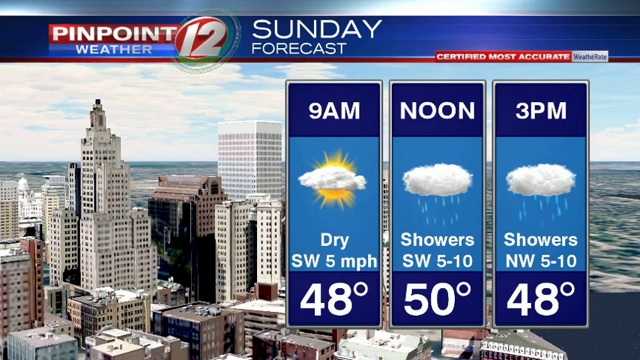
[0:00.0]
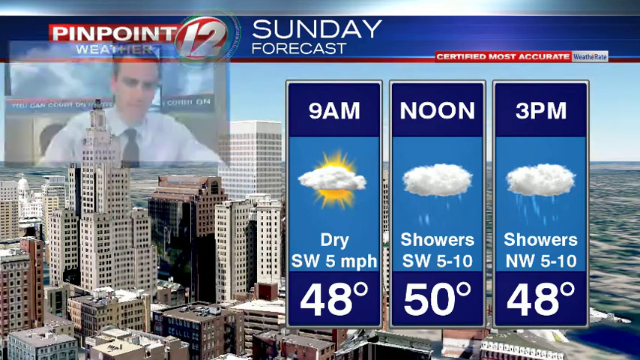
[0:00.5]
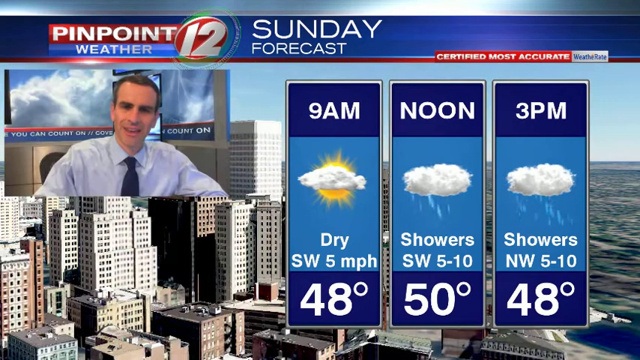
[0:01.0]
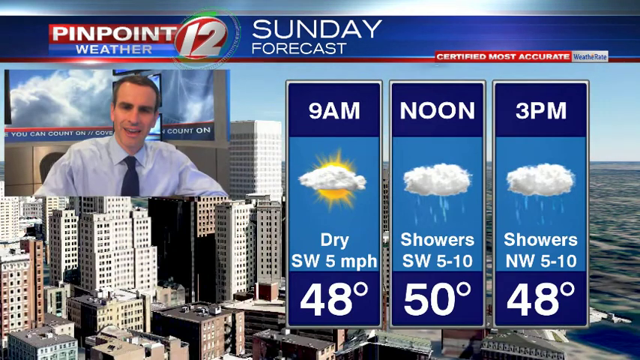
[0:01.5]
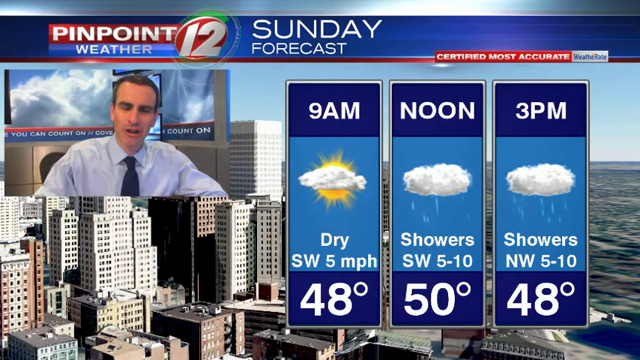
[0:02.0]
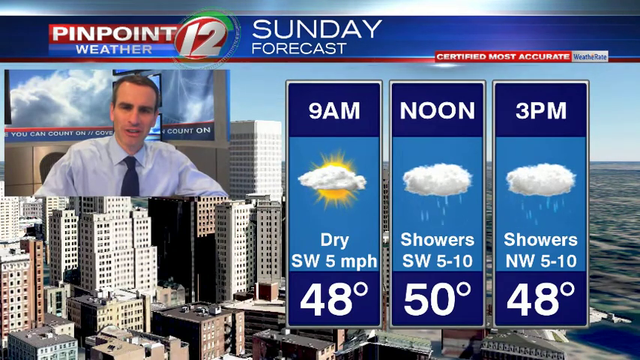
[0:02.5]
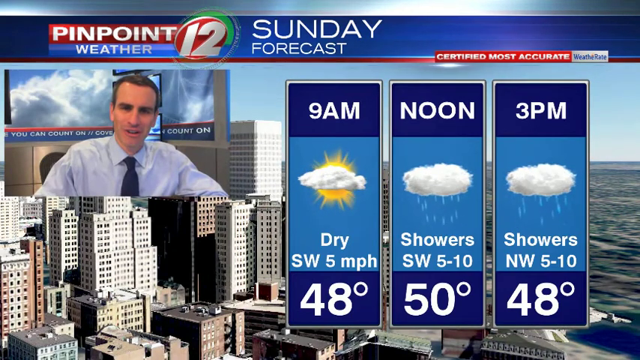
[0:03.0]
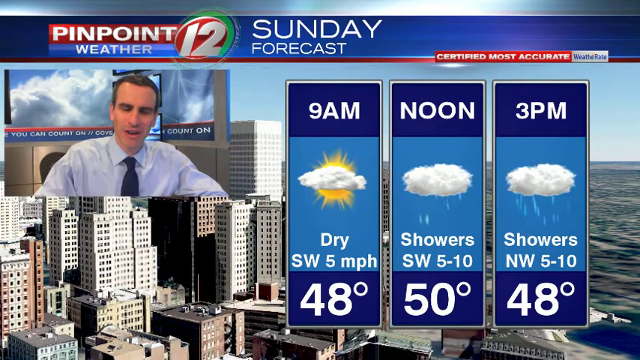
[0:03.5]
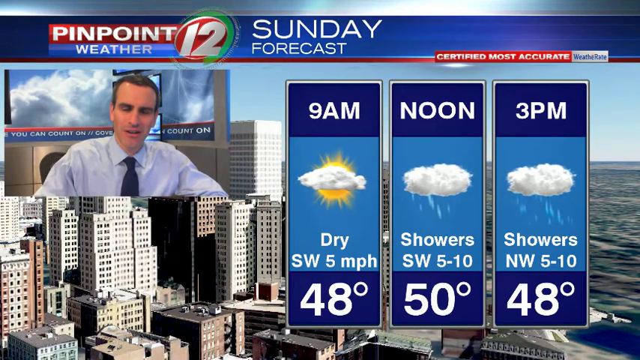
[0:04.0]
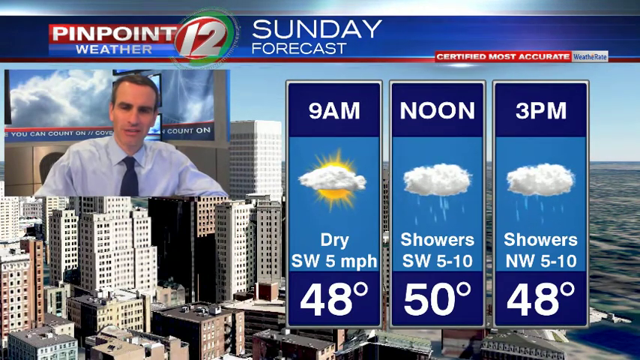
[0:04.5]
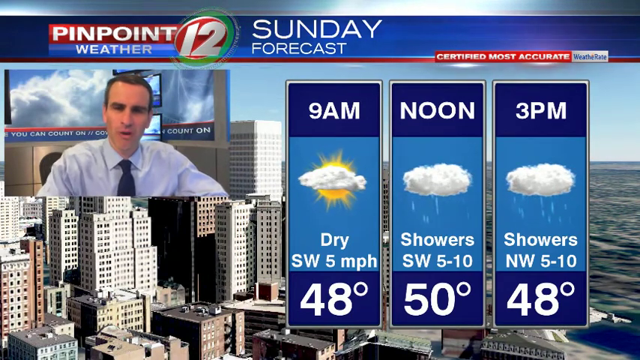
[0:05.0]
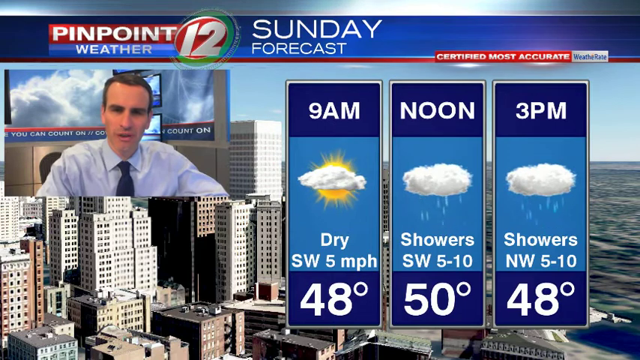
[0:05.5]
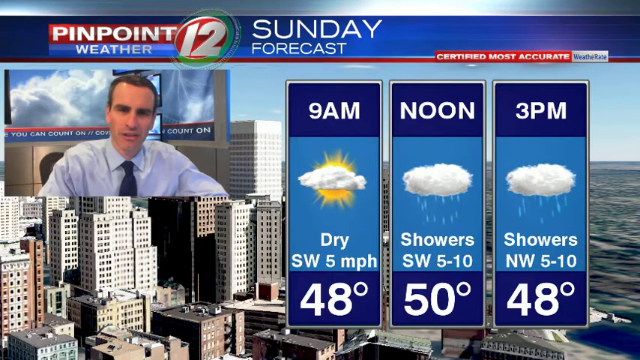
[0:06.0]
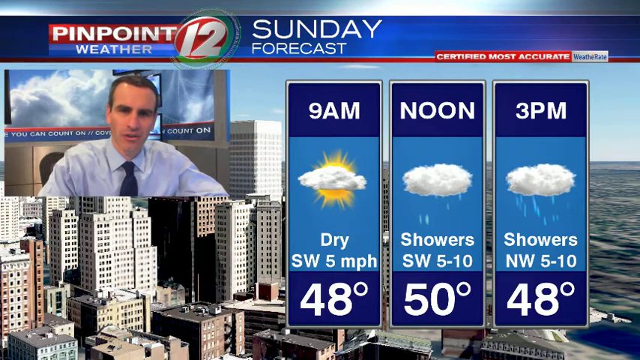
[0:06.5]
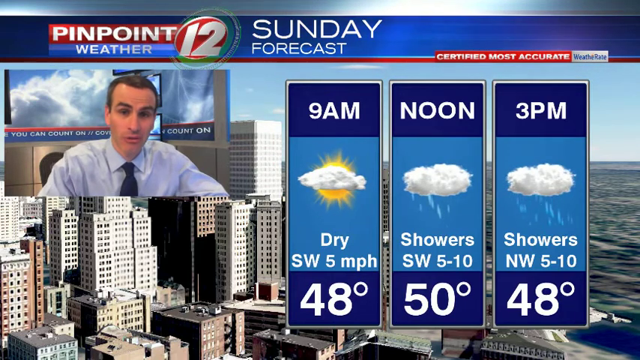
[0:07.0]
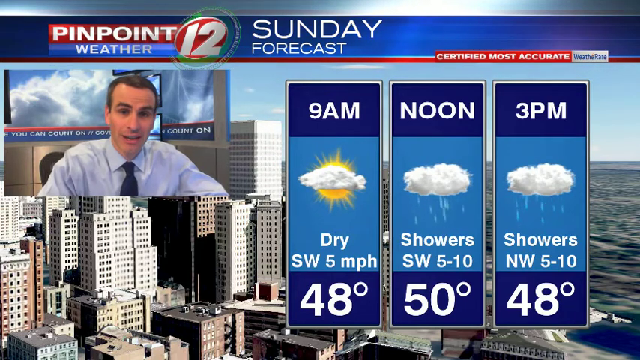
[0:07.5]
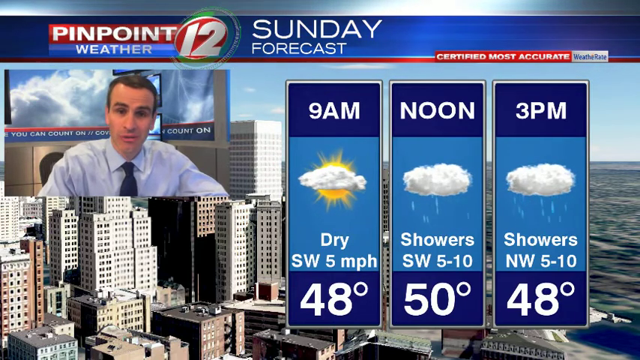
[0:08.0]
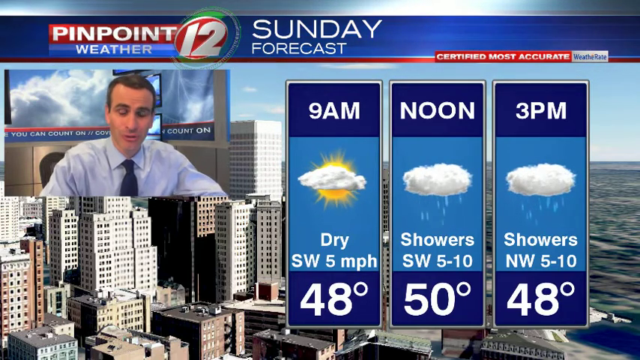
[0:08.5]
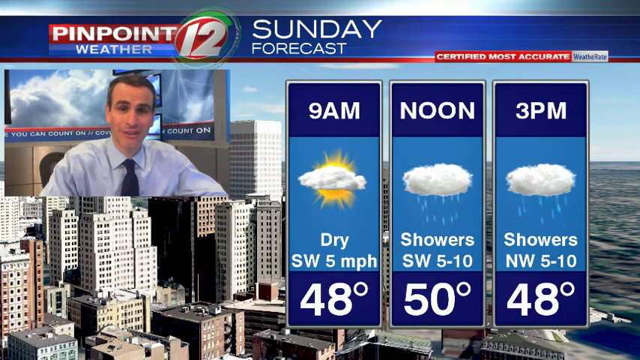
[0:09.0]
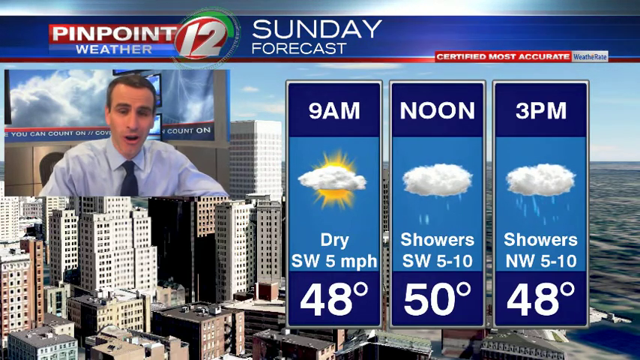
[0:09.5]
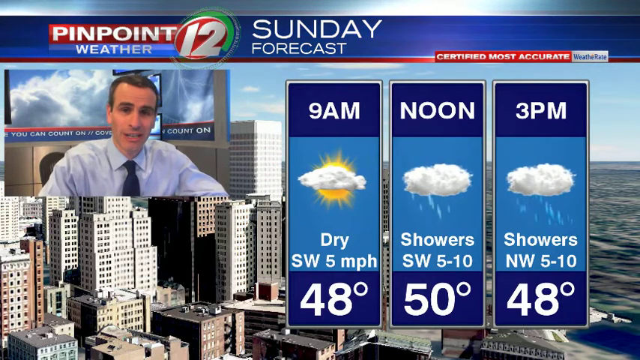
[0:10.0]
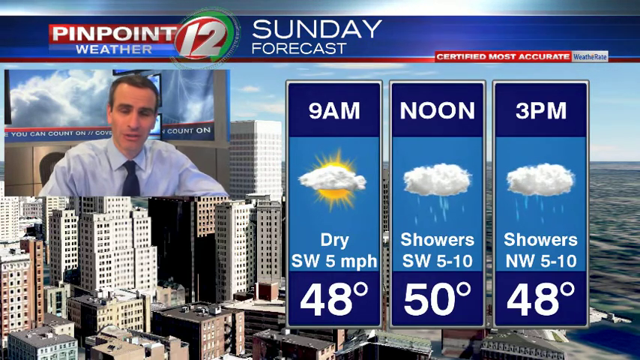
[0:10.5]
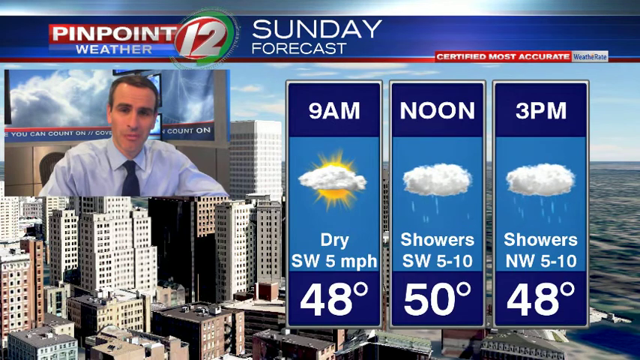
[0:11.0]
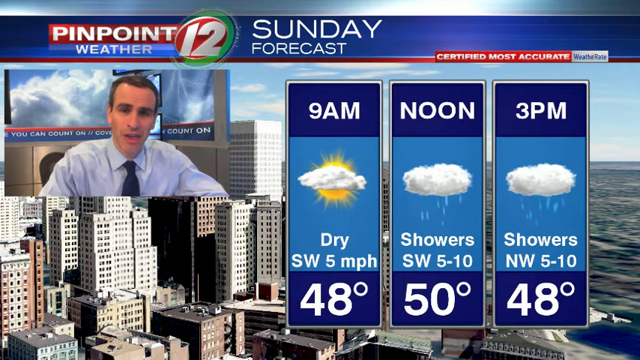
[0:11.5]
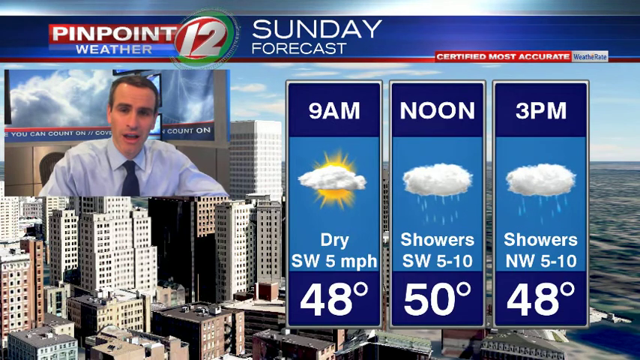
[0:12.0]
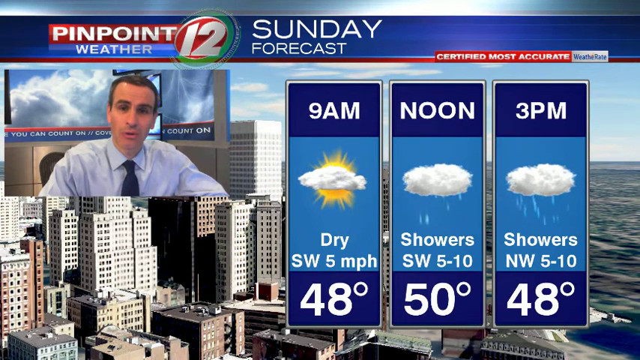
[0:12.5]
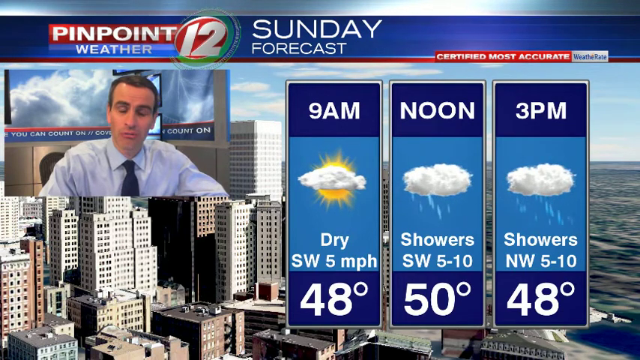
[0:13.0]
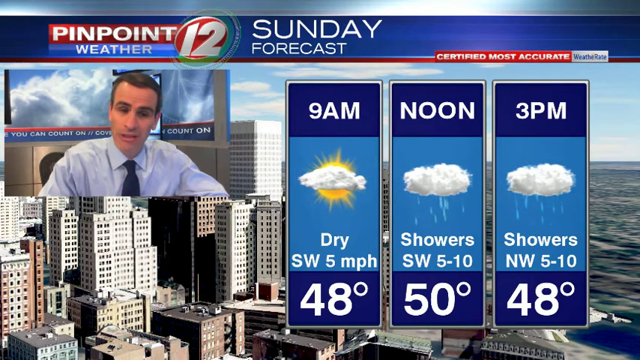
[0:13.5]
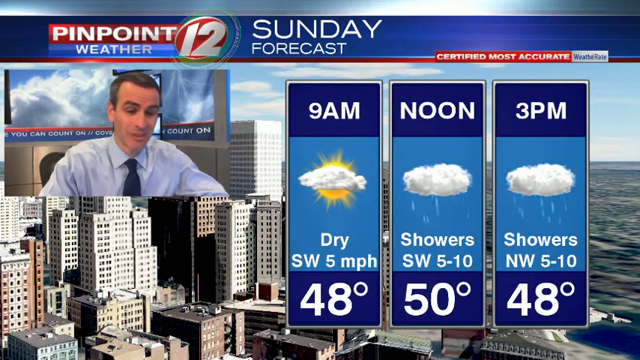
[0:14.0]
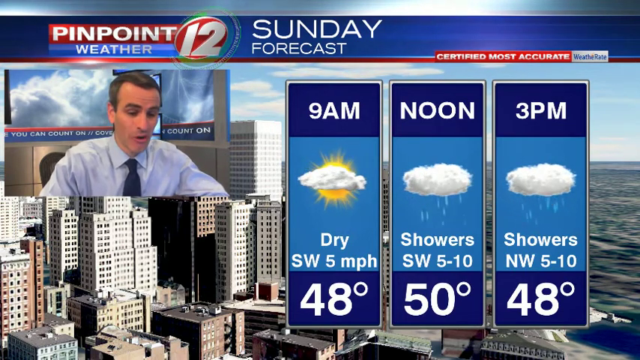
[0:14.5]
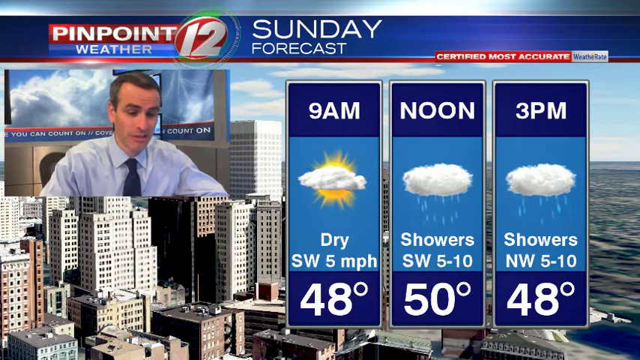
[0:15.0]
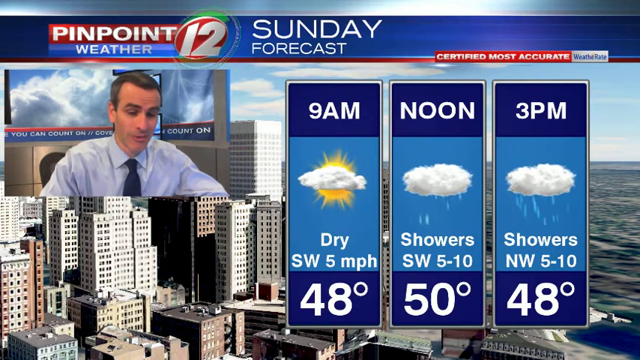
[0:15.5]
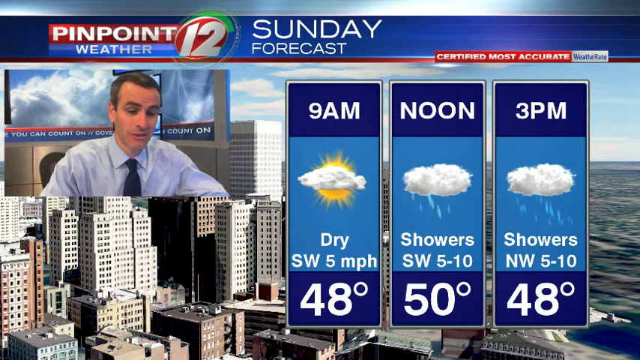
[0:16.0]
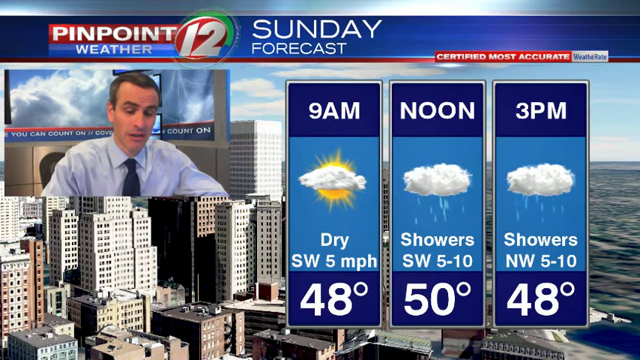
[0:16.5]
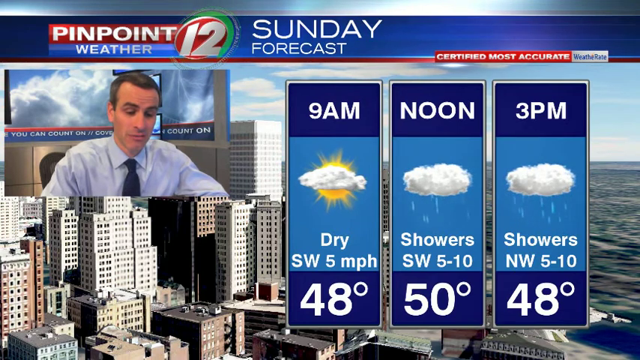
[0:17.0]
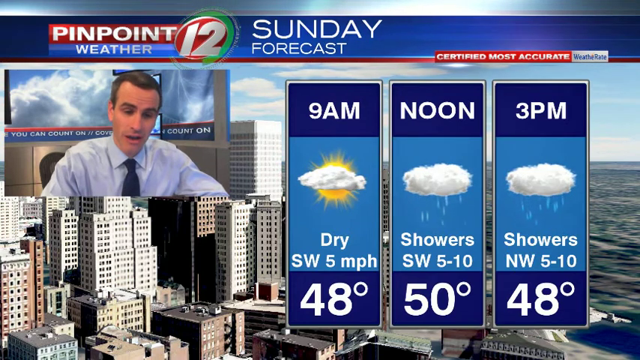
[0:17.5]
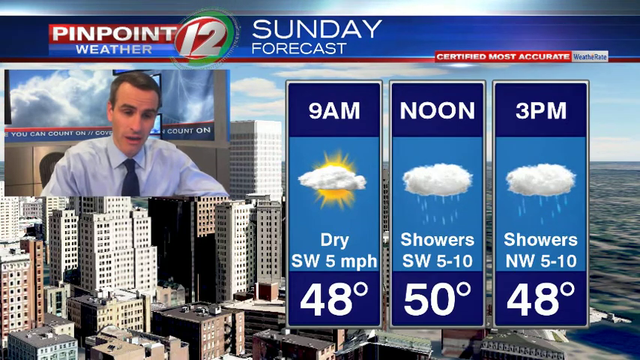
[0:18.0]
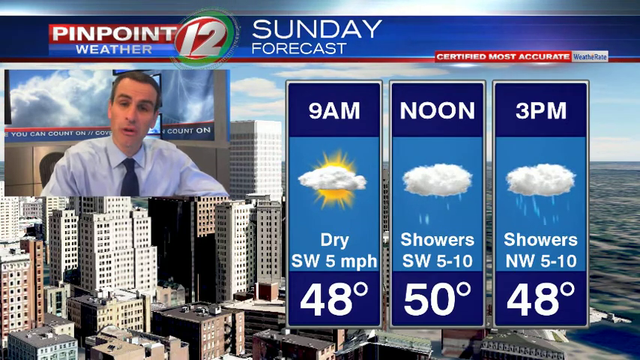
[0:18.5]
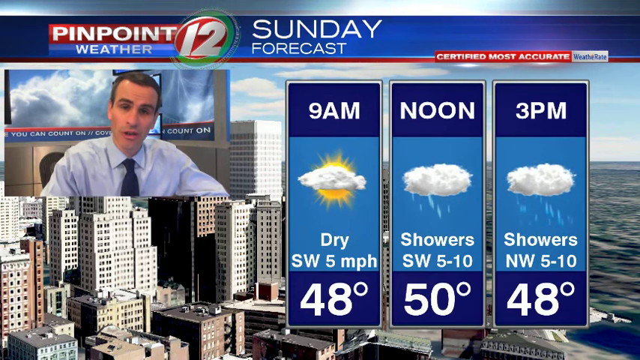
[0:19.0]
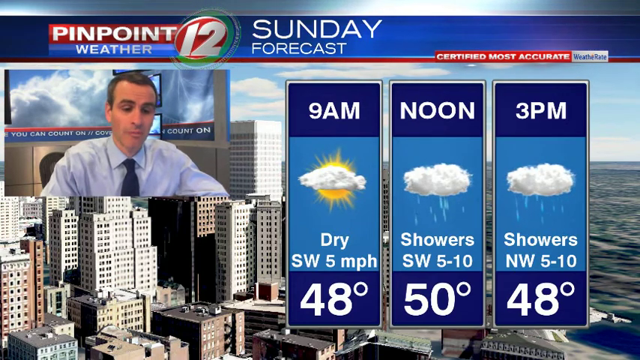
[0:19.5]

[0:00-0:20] A weather forecast is displayed on the right side of the screen for the Sunday forecast, and a banner reads "pinpoint 12 weather. Sunday forecast certified most accurate." A man on the left is talking, seemingly about the weather. Buildings are behind him, and on the right side of the screen, behind the weather sections, there is the ocean. For 9 a.m. the forecast shows dry conditions with a little sun with a small cloud on top and 48 degrees. At noon it shows rain showers, 50 degrees, and southwest 5 to 10. At 3 p.m. it shows rain showers, northwest 5 to 10, and 48 degrees. The video of the man on the left then disappears. He wears a light blue blouse and a black tie and looks to be in his mid 40s to 50s.